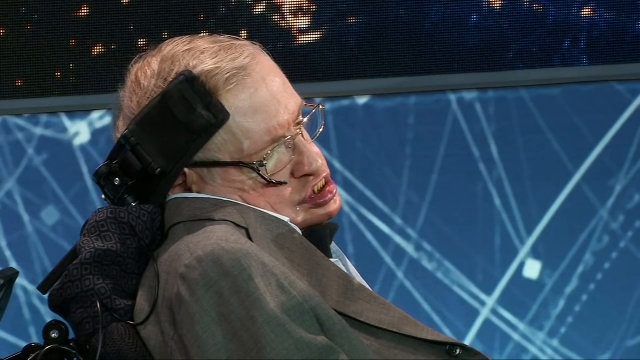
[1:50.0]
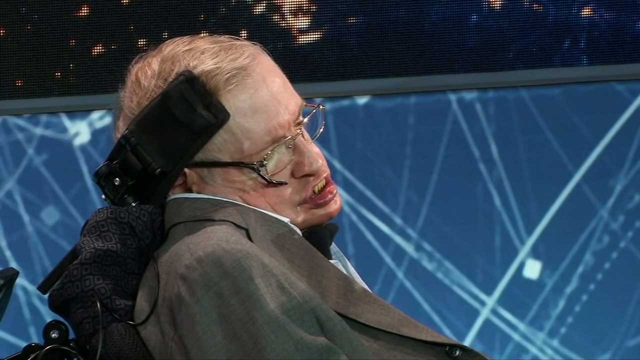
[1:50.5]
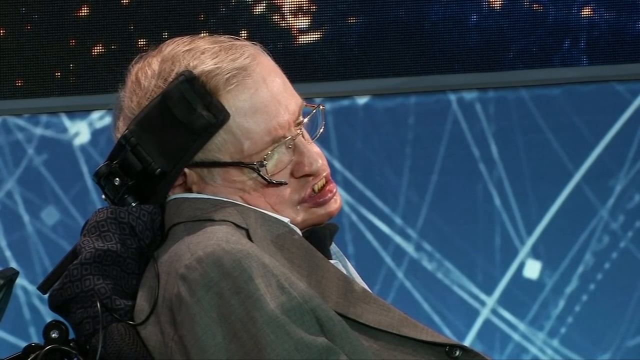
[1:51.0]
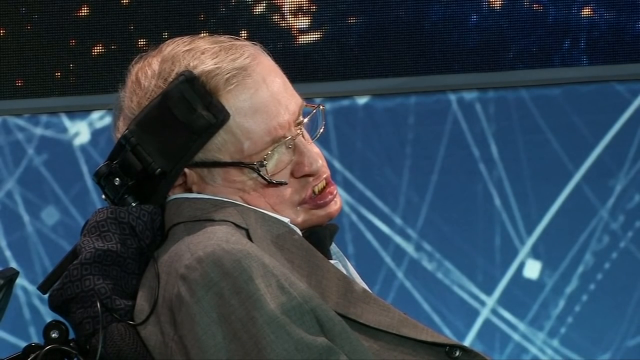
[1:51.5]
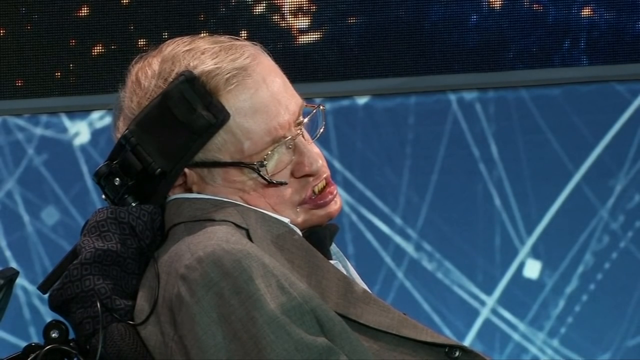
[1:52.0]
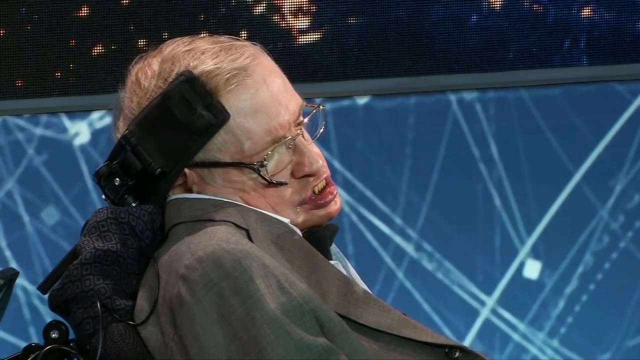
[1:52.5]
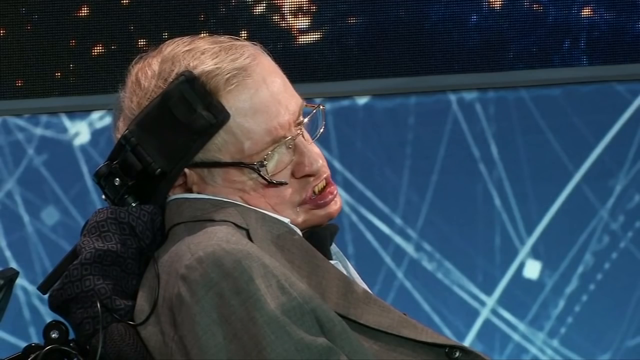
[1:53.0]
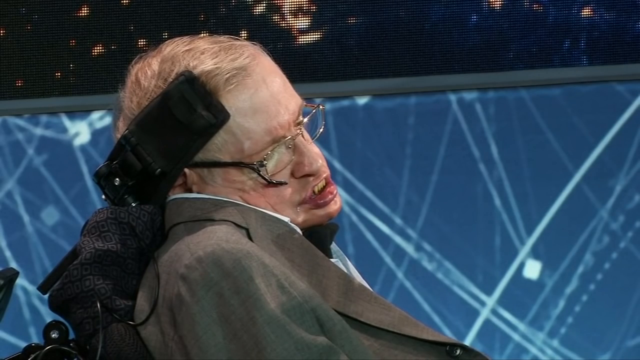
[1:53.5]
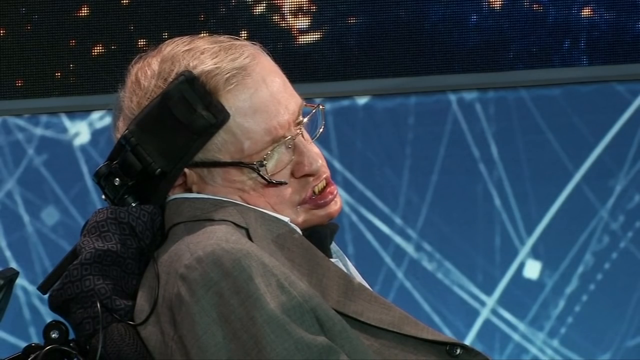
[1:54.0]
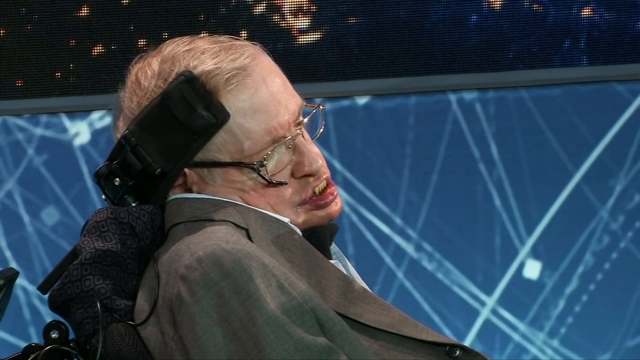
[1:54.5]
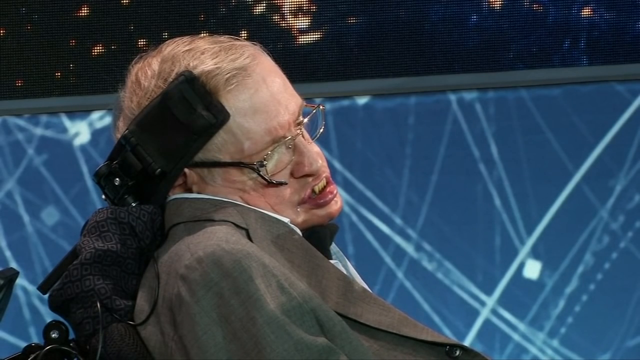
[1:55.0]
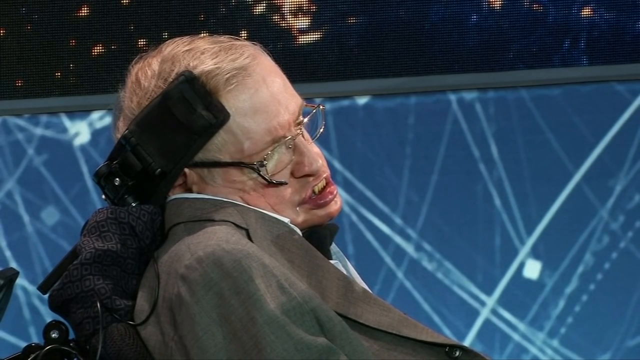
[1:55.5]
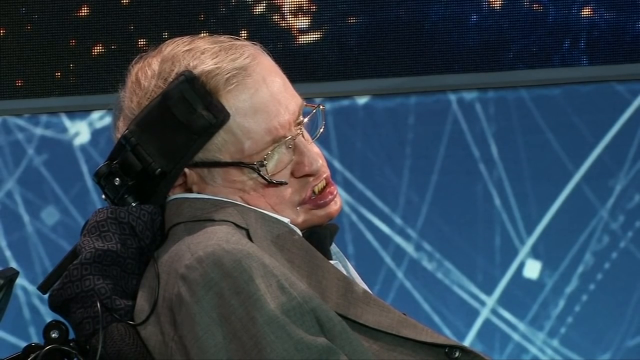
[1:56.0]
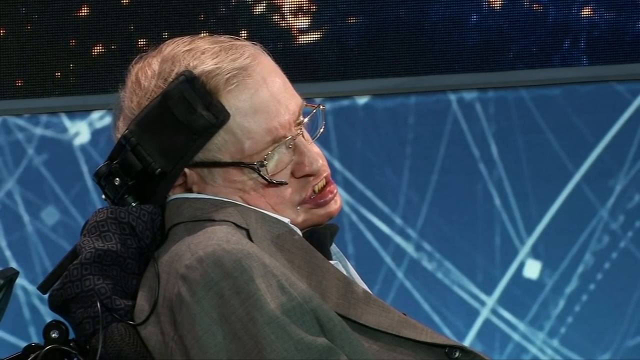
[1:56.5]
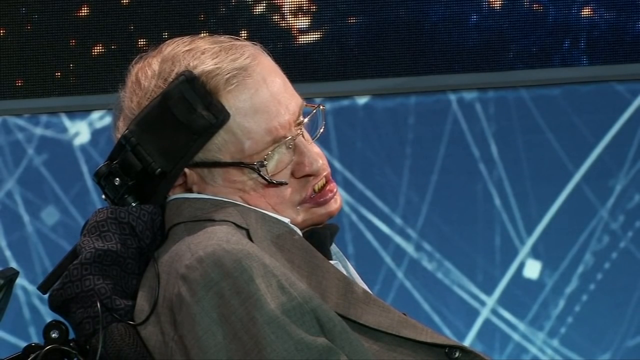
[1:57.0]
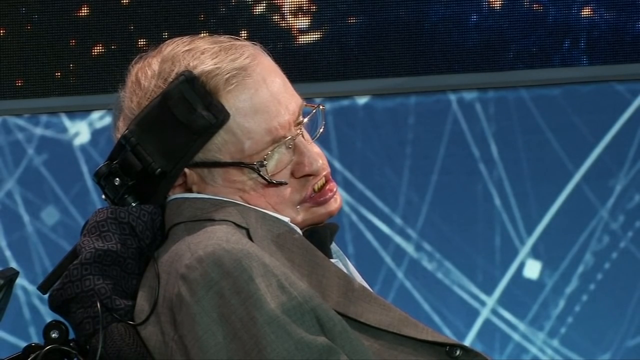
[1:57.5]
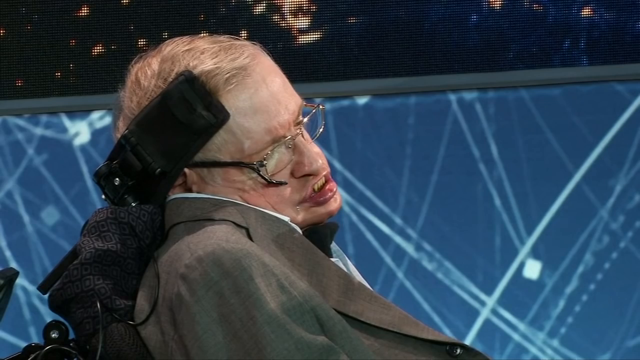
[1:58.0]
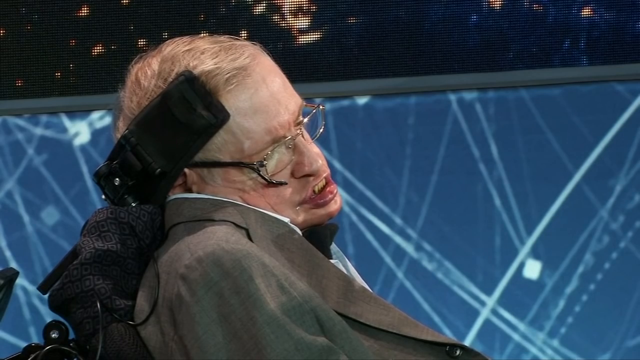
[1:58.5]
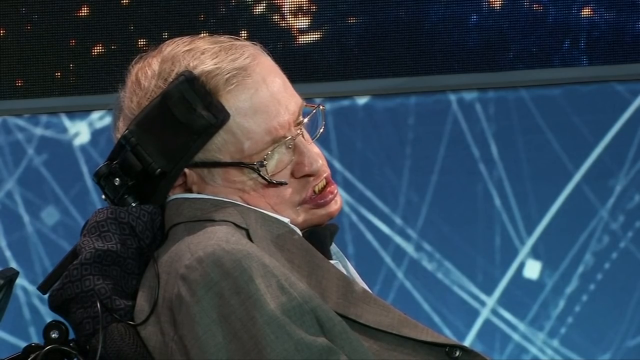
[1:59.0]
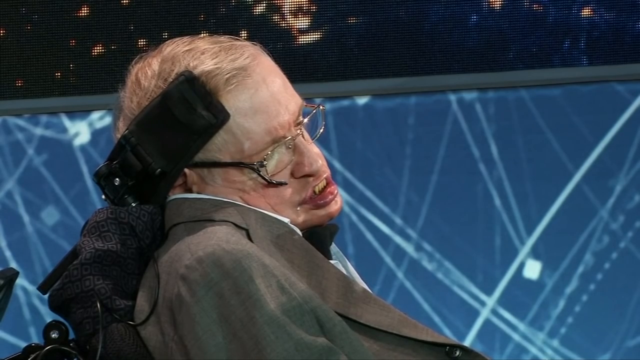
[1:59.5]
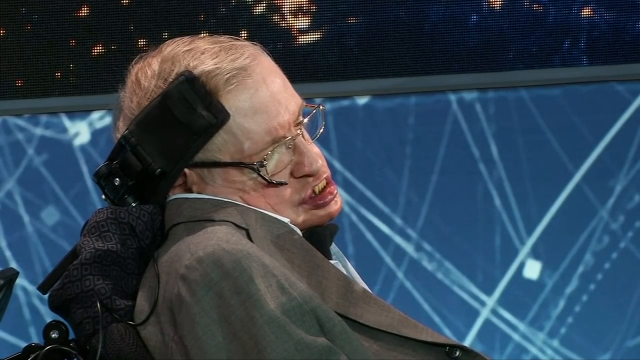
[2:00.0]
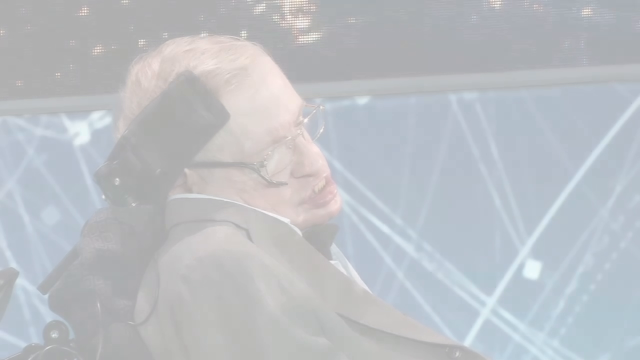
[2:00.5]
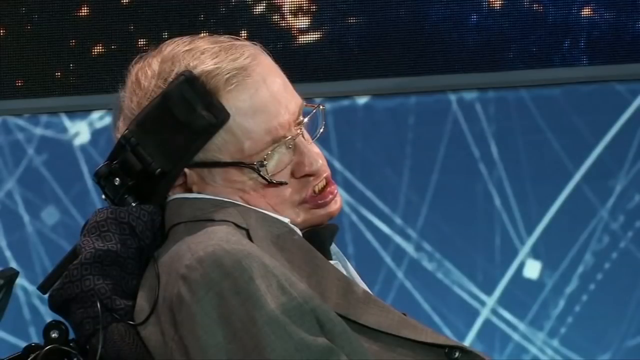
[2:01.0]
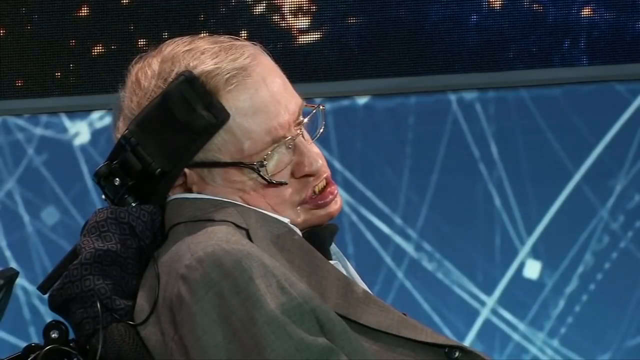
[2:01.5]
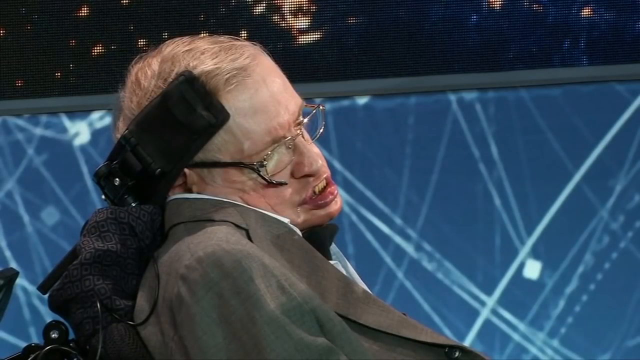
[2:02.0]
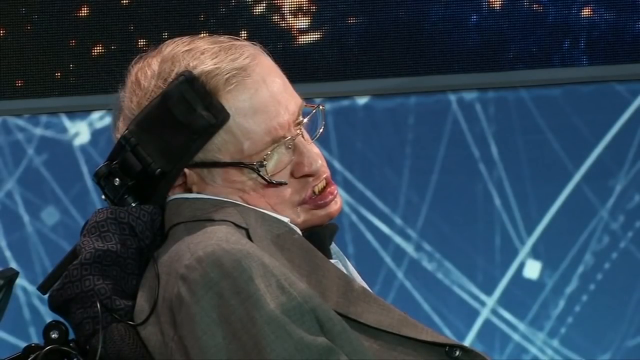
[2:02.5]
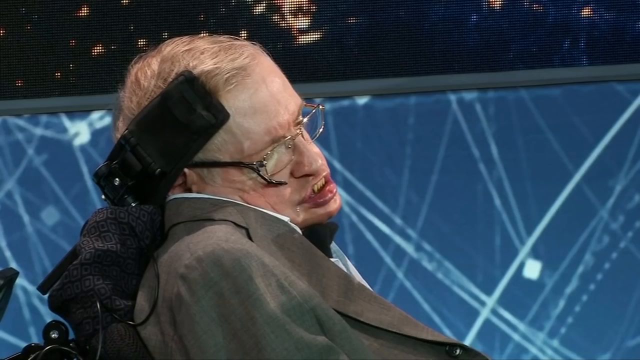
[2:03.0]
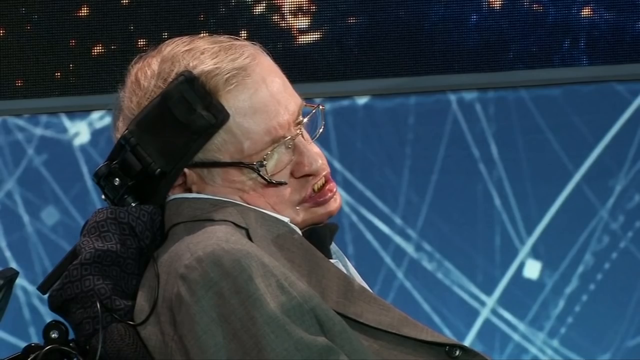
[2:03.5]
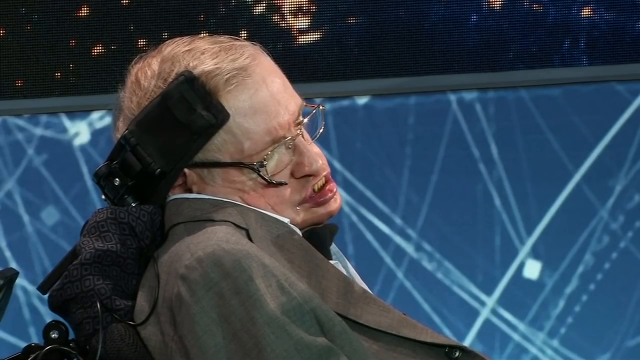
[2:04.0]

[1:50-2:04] A close-up shows Stephen Hawking sitting in his chair, leaning against a headrest, on the stage at the conference or presentation. Behind him is a large screen with a space background, black with what look like stars scattered across it. His mouth moves ever so slightly, and he appears to be talking, though not with a wide open mouth. He wears a grey suit jacket and a white shirt, and it seems to be a formal event that he is attending and speaking at.